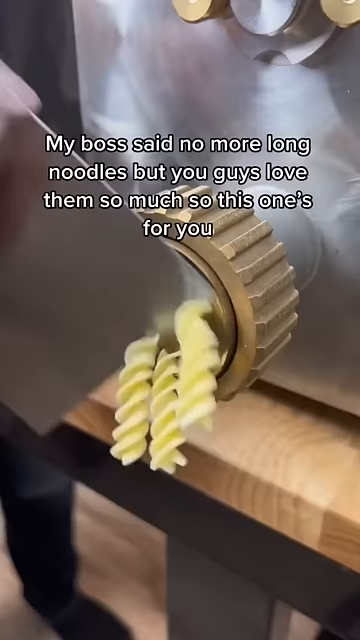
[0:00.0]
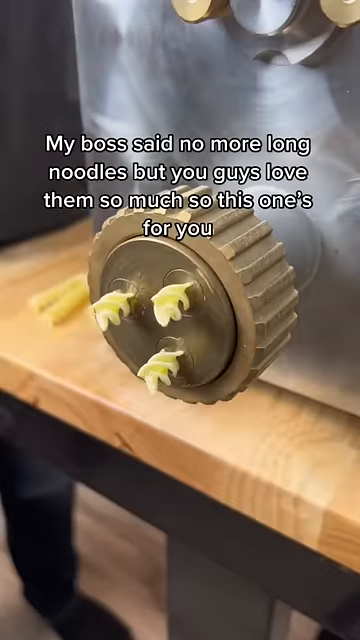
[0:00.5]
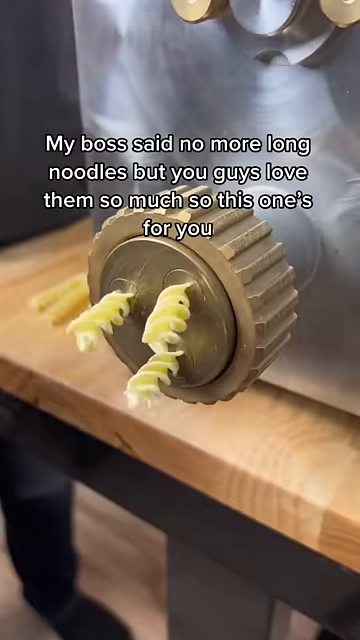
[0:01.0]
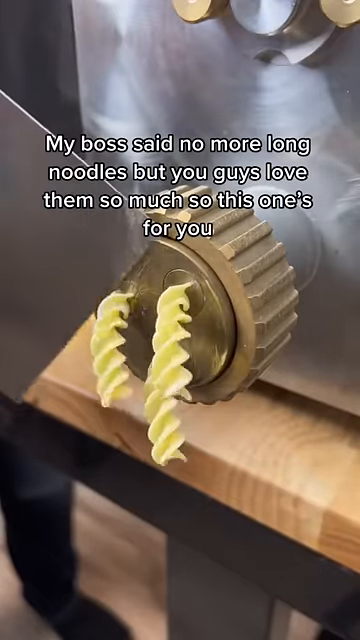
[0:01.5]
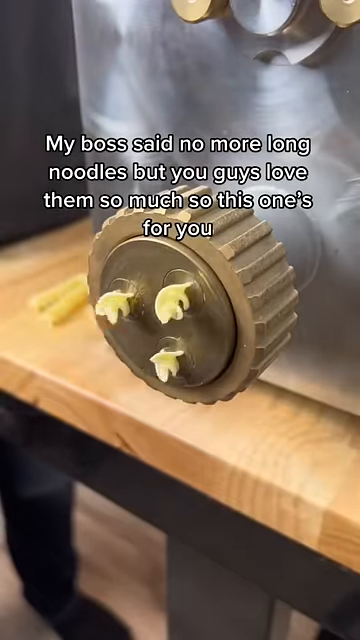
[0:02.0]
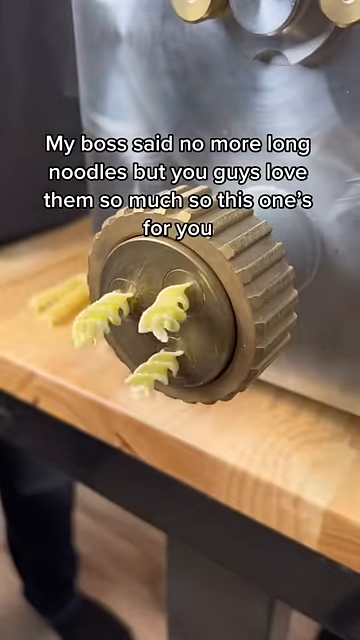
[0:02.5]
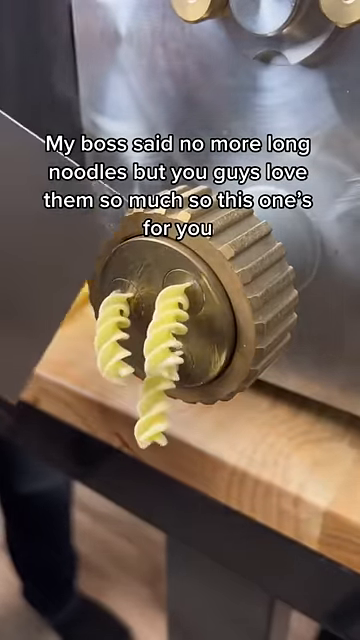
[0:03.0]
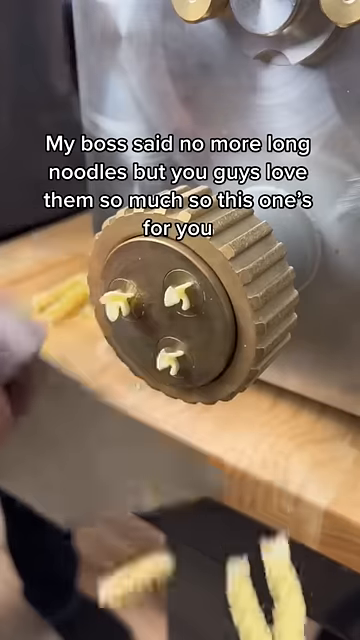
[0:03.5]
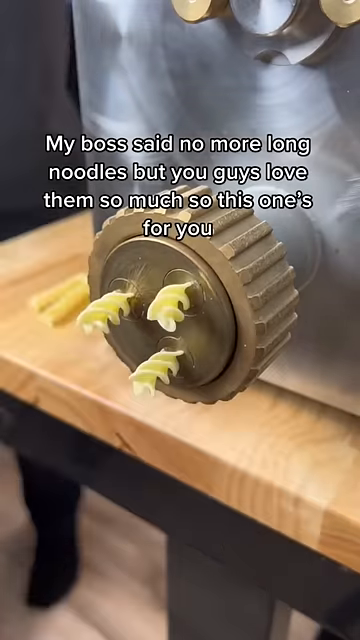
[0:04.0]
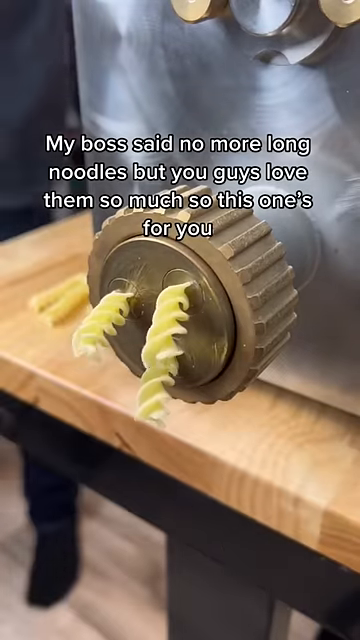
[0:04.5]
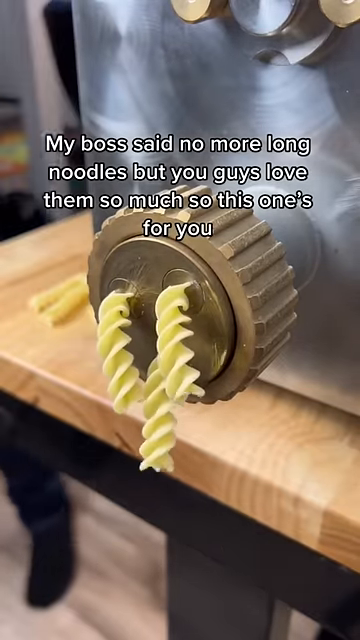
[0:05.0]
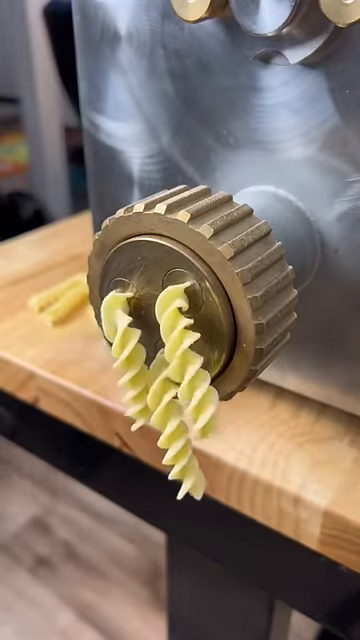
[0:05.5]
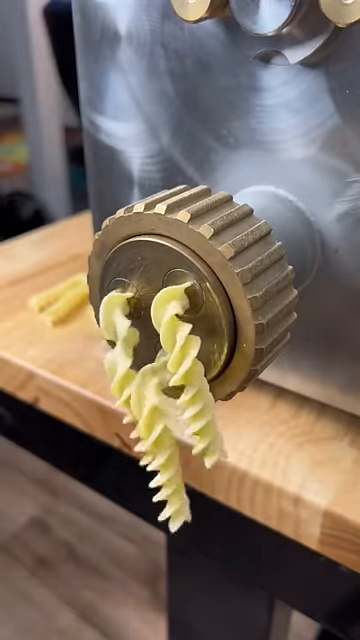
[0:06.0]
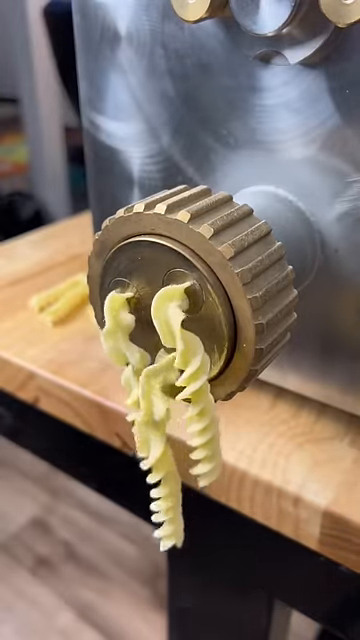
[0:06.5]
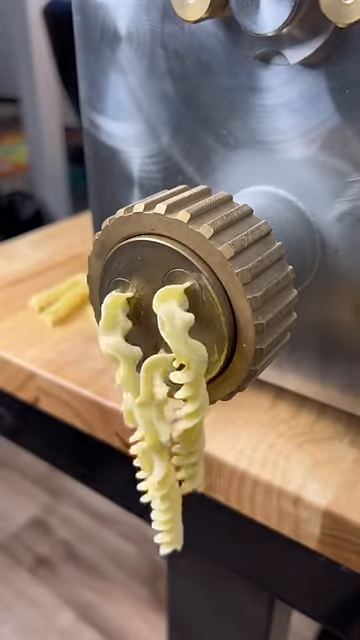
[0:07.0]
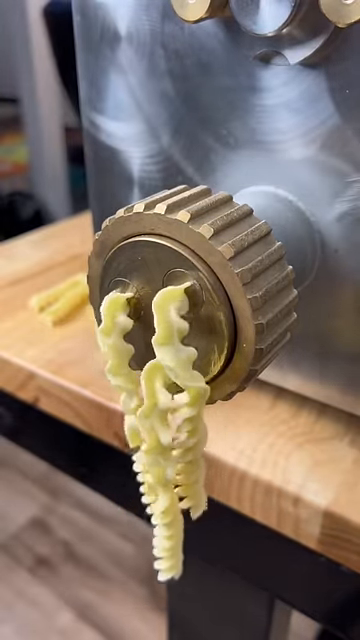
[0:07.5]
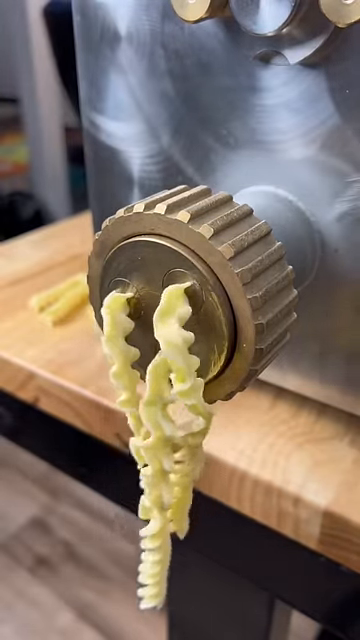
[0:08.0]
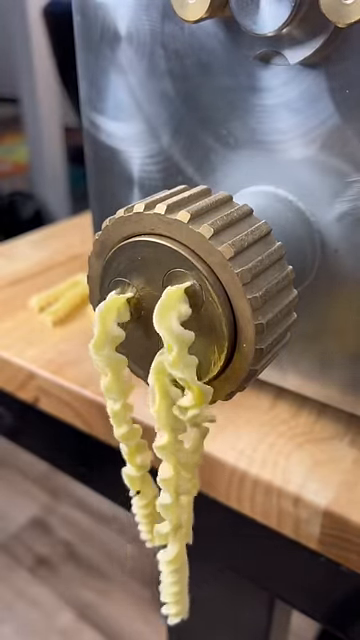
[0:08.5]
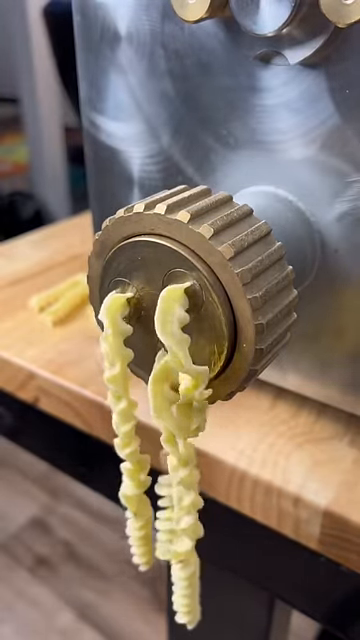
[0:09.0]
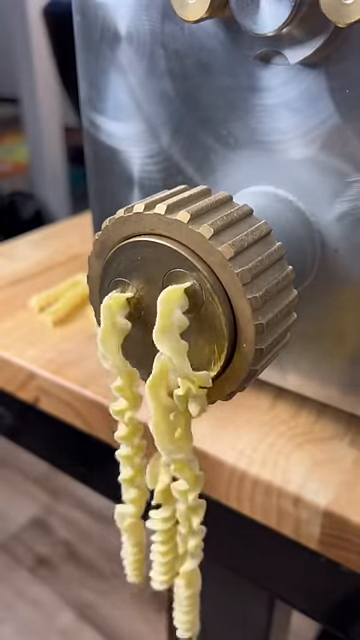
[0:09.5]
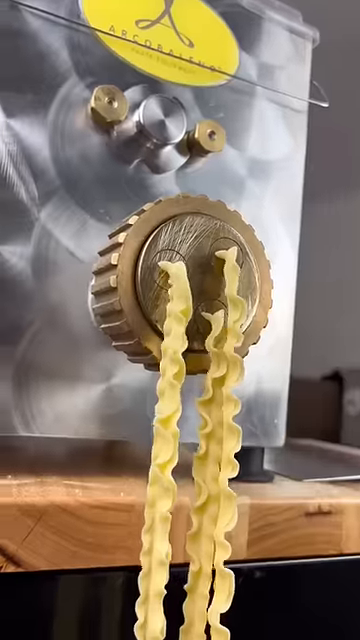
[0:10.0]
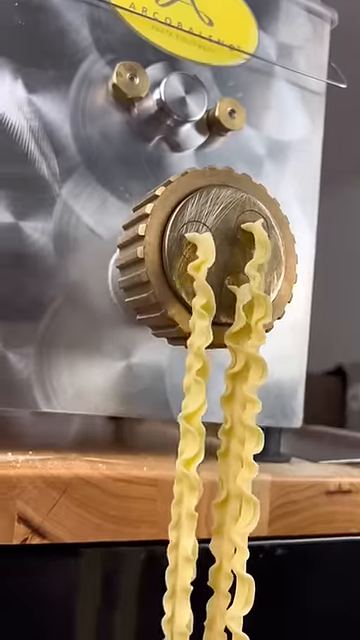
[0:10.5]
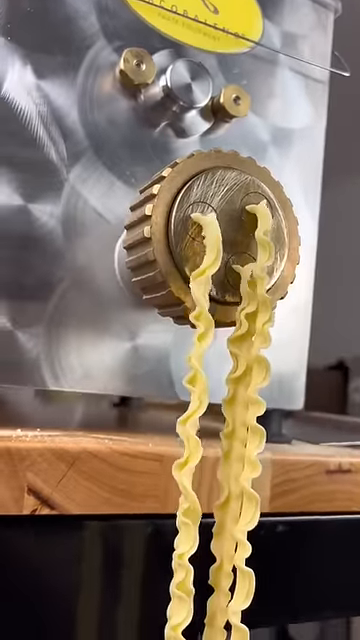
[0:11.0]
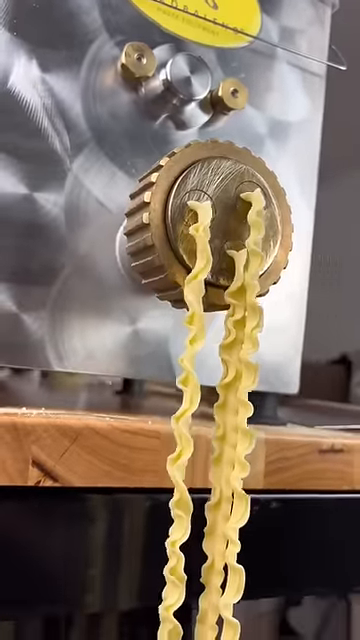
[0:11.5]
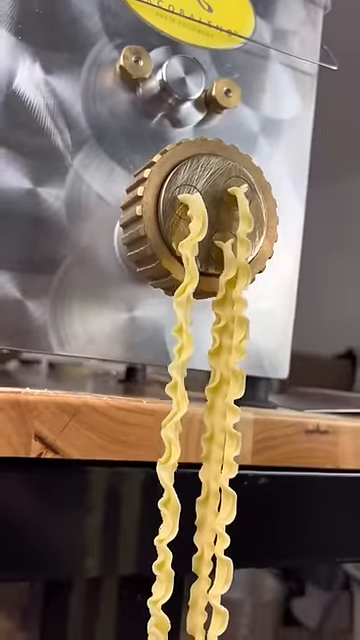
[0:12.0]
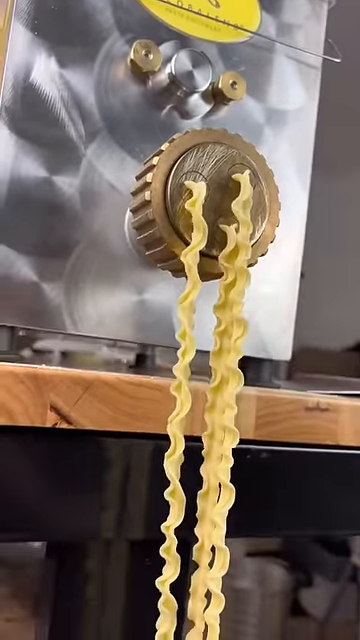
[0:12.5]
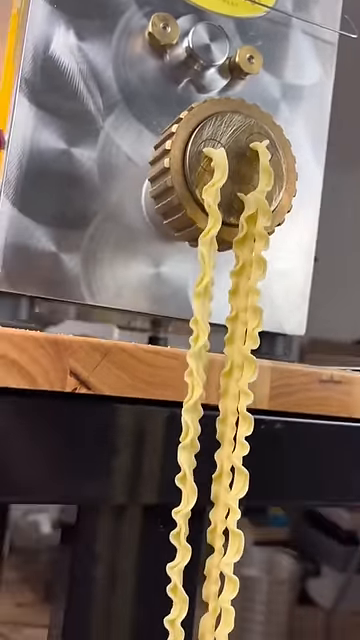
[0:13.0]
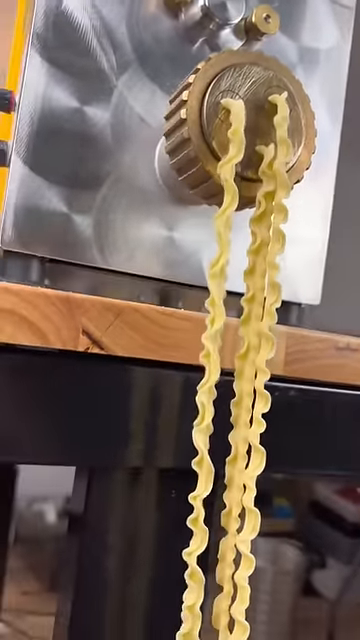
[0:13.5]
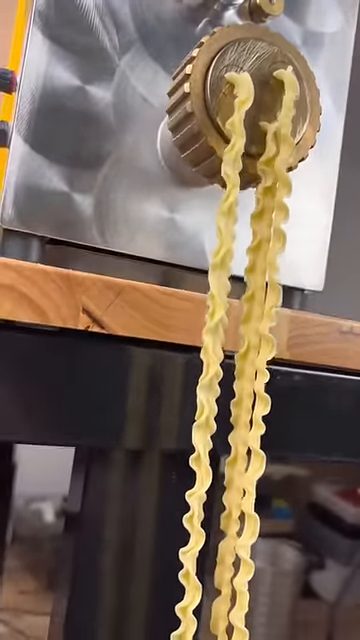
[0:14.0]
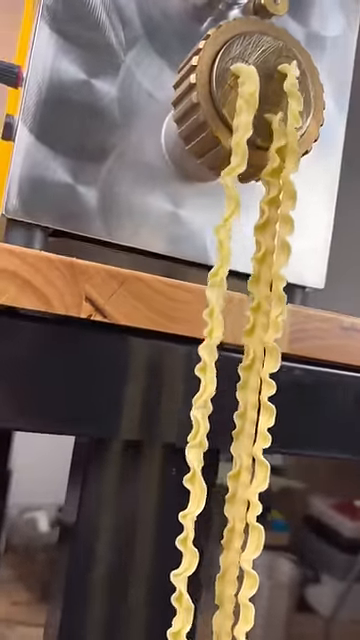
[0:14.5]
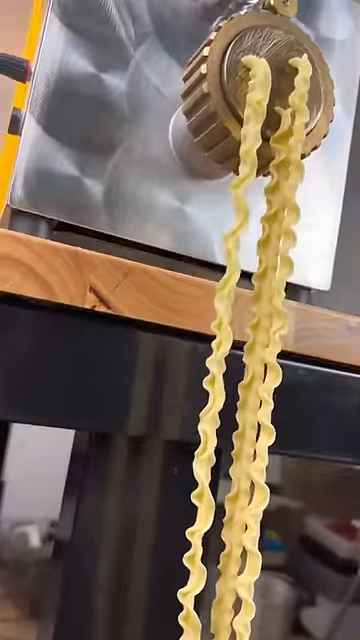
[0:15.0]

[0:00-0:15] A machine, its exact type unclear, is making noodles. There are three circles, and noodles are coming out of them. At first there is possibly a cutter, and the noodles that come out are cut four times in a row; then the noodles come out extremely long. Text on the video reads "my boss said no more long noodles but you guys love them so much so this one's for you." The noodles are yellow and spiral-shaped. The video ends with the long noodles still coming out.